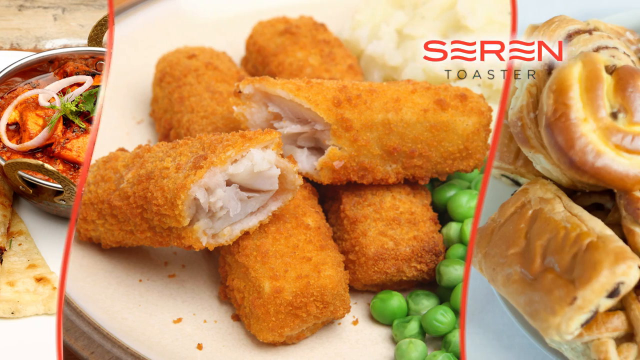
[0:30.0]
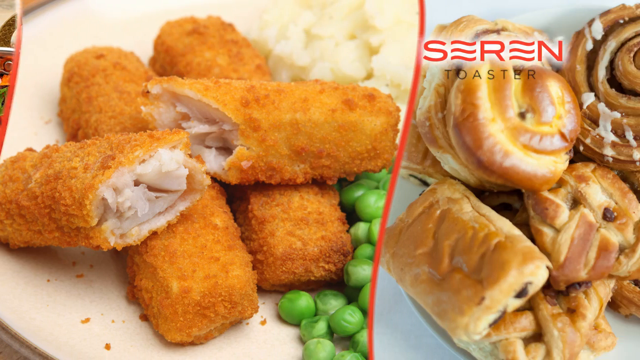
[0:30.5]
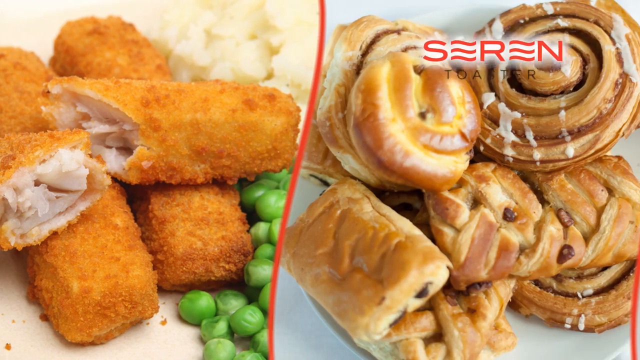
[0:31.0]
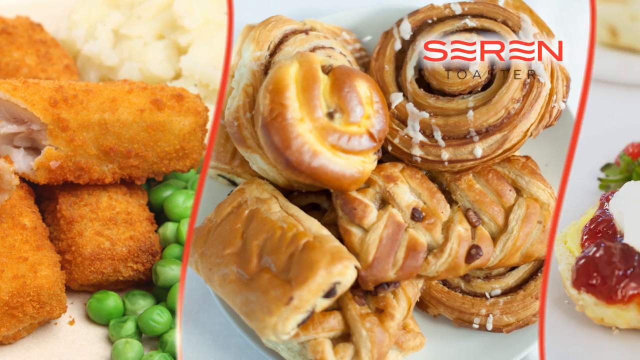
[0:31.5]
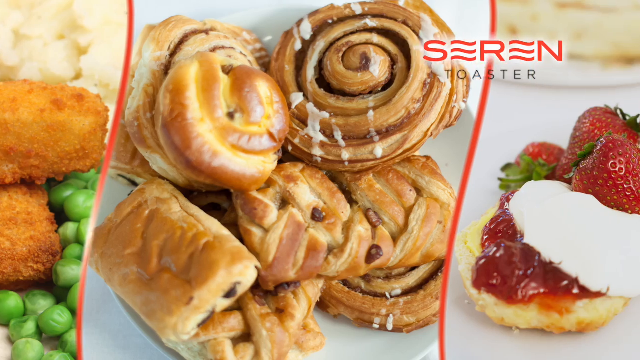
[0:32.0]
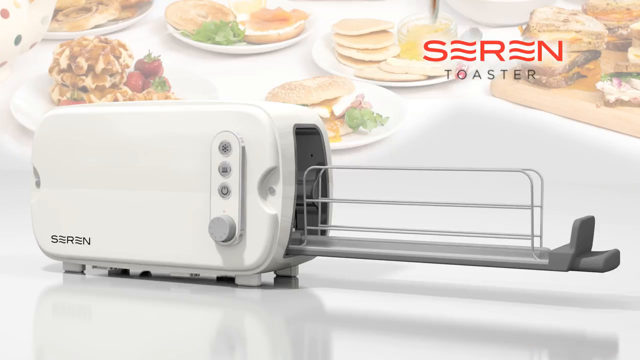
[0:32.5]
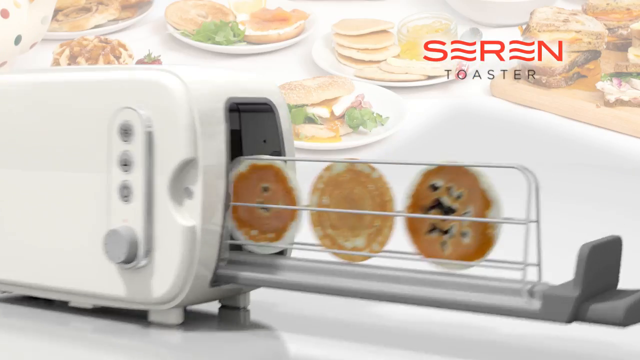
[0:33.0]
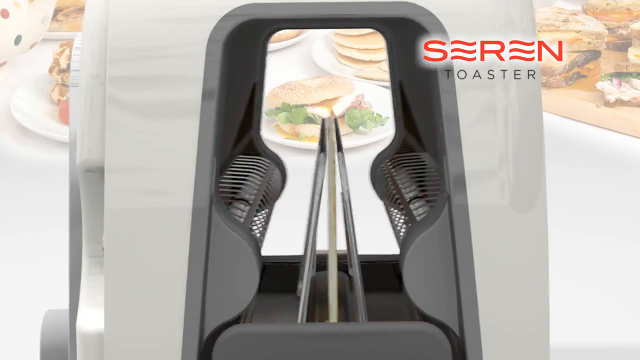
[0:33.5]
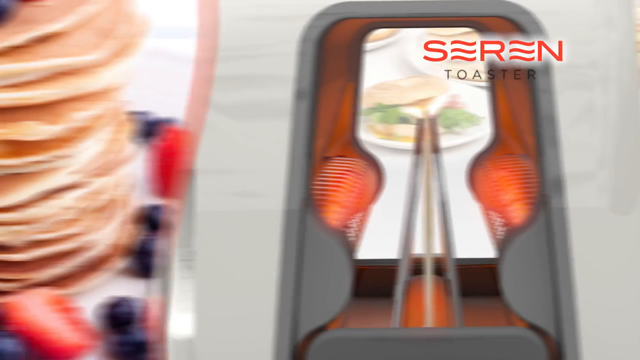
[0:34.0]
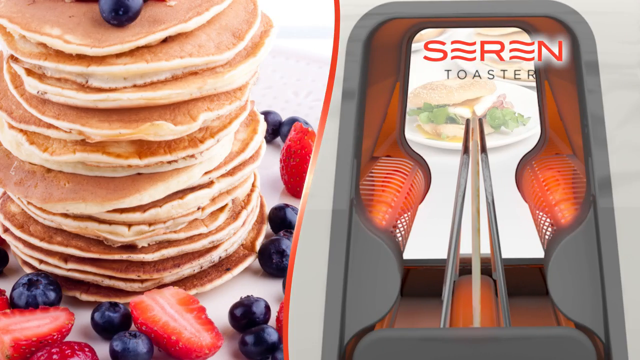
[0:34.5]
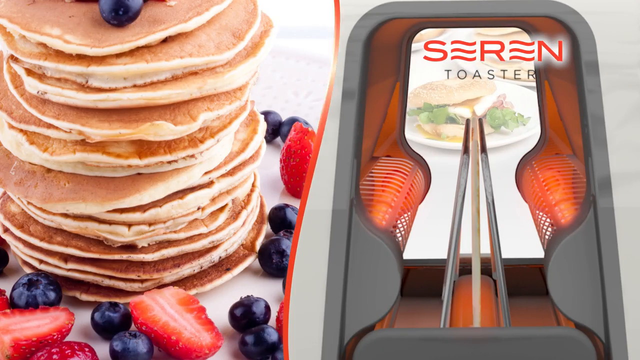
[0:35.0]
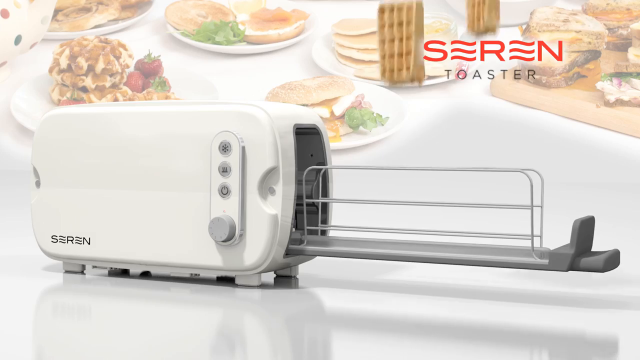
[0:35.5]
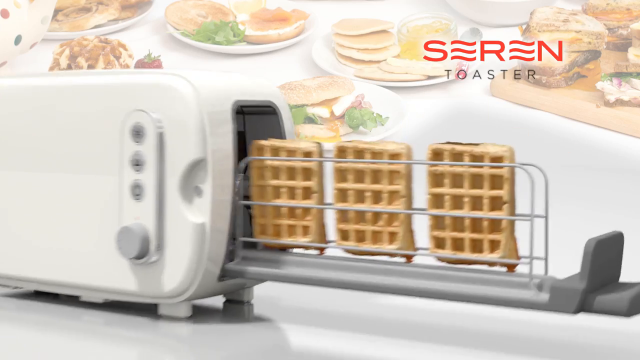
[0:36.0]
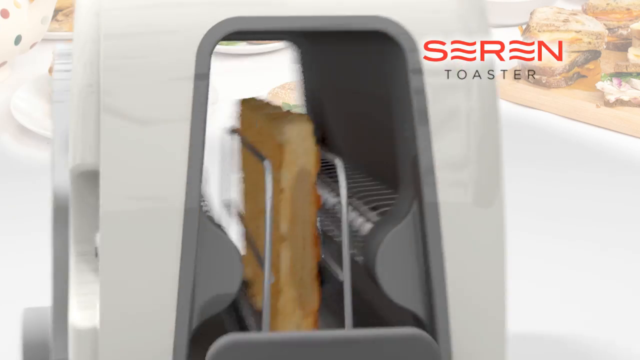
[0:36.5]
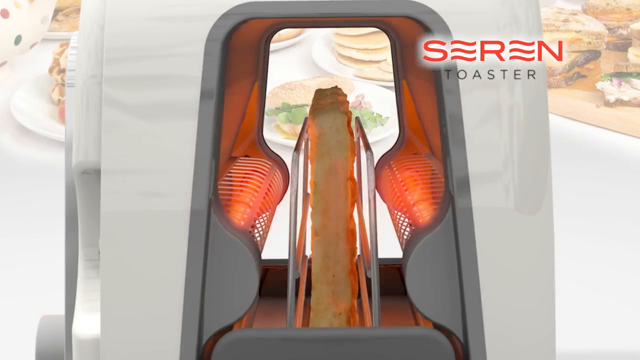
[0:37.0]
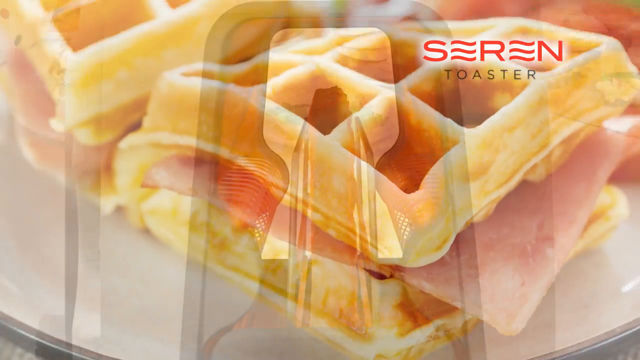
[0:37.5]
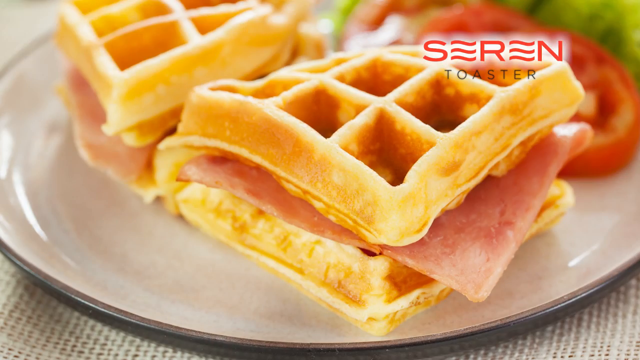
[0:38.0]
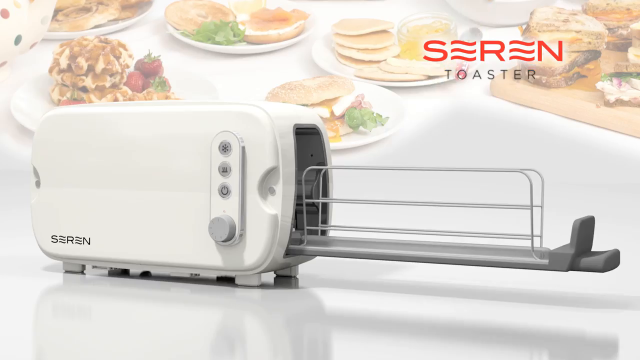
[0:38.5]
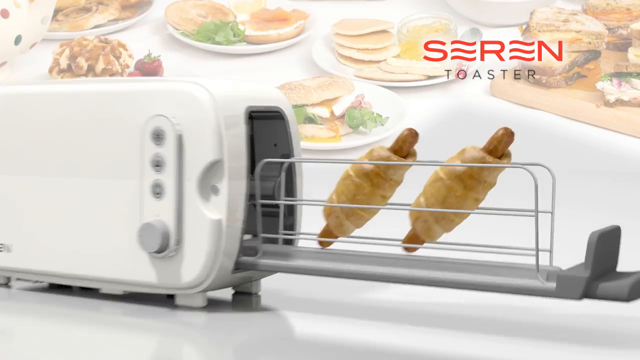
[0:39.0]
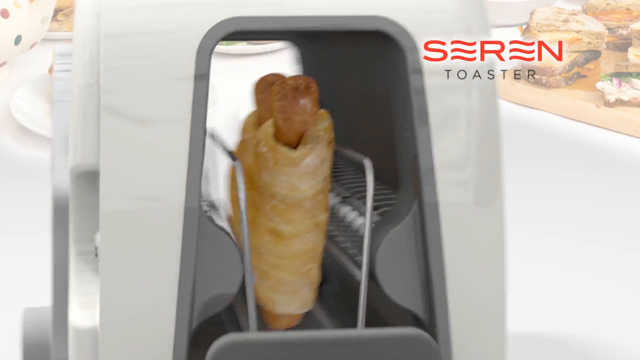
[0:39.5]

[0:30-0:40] The white Seren toaster, with a rack that pulls out of the side, is superimposed on a washed-out screen with food in the background, such as pancakes, waffles and maybe an egg sandwich. With the rack pulled out, three disc-like objects, sort of animated, drop into it; they are very thin slices of blueberry bagel with bits of blueberry in them. The camera moves to look inside the toaster from the side, showing heating elements on either side getting close to, but not touching, the rack that holds the bread. The heating elements turn on, going from a sort of neutral light reddish gray to lit up in dark red. This view into the toaster with the lit heating elements is on the right-hand side of the screen, with blueberry pancakes on the left-hand side. A front image of the toaster with the rack pulled out follows; three waffles drop in from the top of the screen and the rack closes itself, putting the waffles into the toaster, with the Seren logo in the upper right-hand side. Looking into the toaster, the waffles are held in the rack as the heating elements heat up, dark red as though glowing. Toasted square waffles are then shown with what appears to be a slice of ham and a slice of cheese between two of them. Two sausage rolls are dropped into the open rack of the Seren toaster and the rack is slid into the toaster.